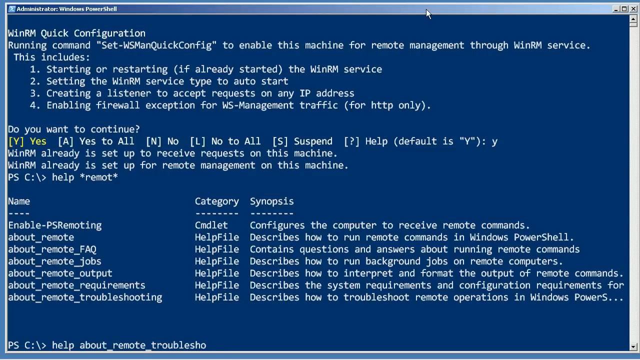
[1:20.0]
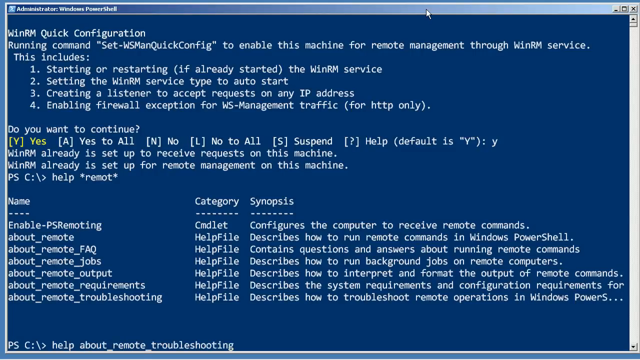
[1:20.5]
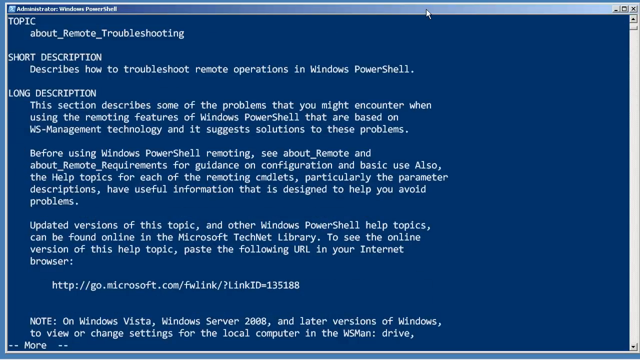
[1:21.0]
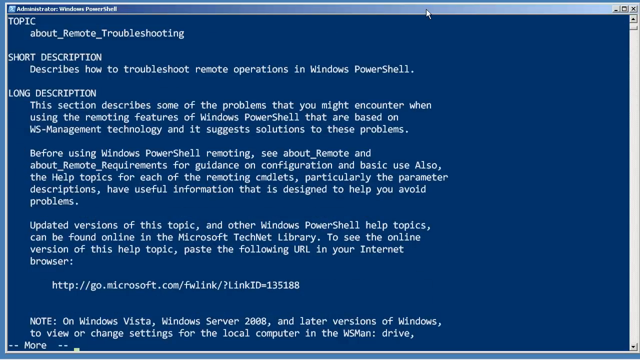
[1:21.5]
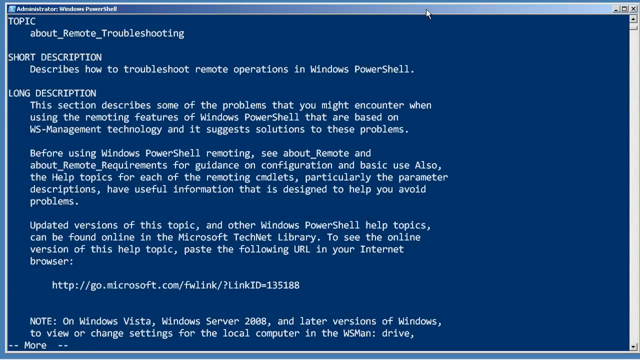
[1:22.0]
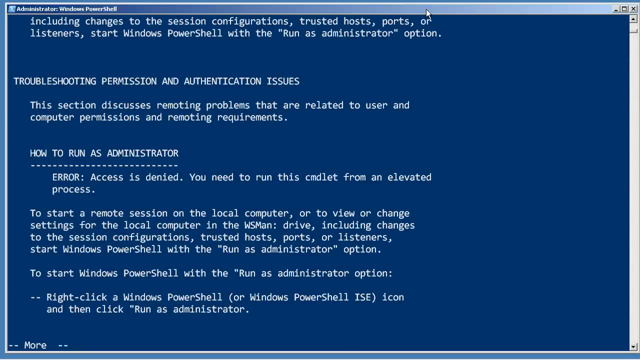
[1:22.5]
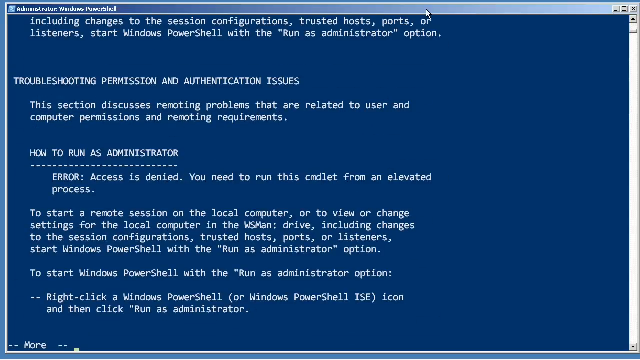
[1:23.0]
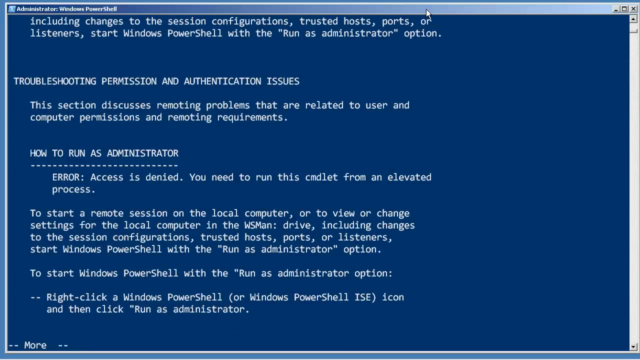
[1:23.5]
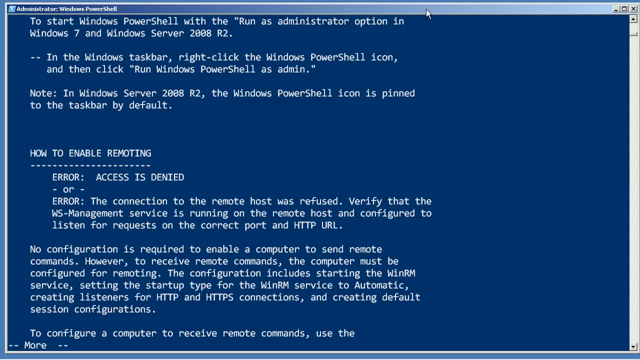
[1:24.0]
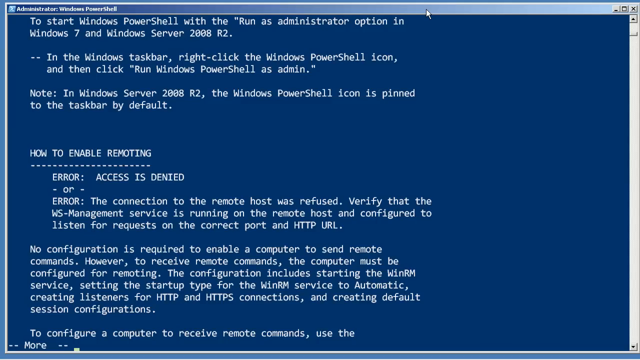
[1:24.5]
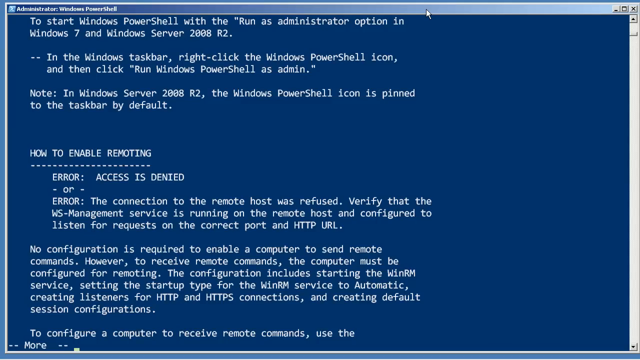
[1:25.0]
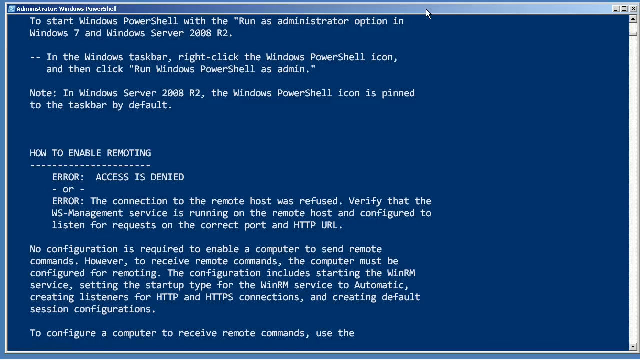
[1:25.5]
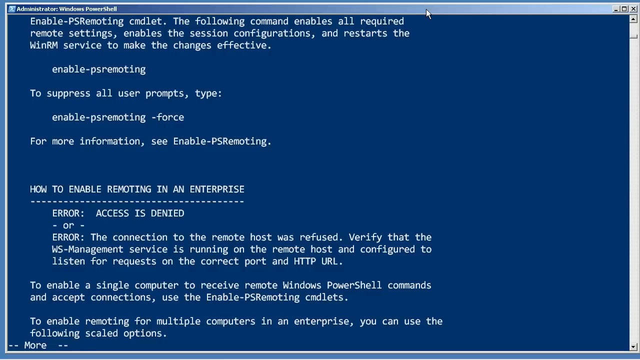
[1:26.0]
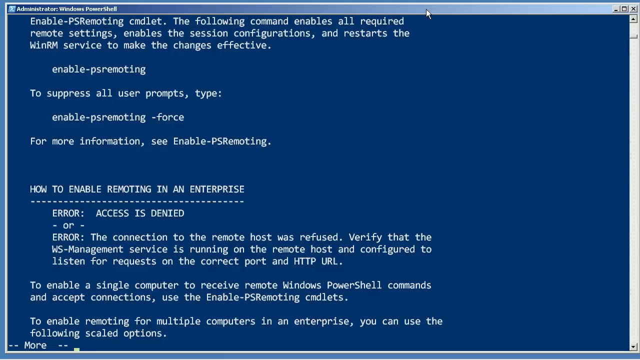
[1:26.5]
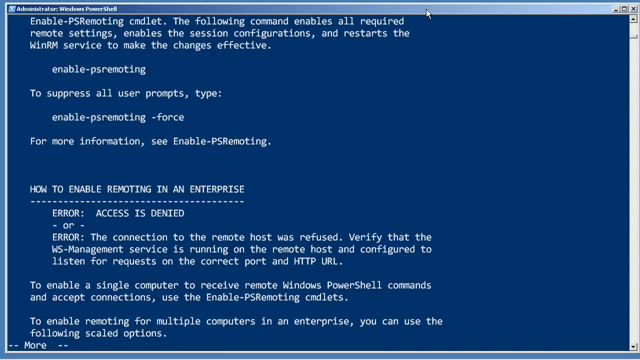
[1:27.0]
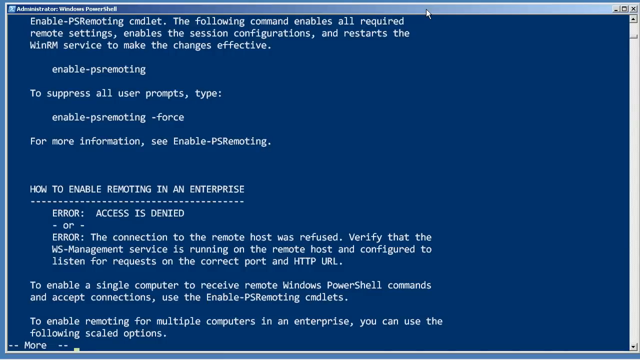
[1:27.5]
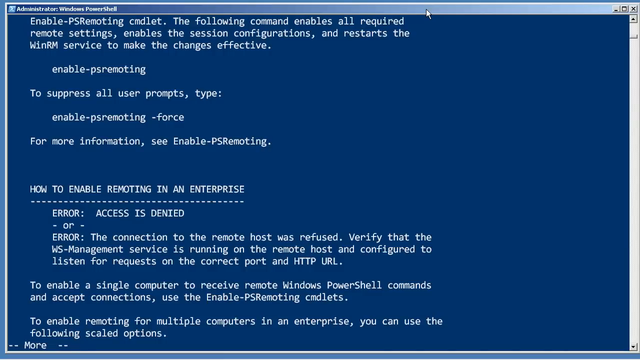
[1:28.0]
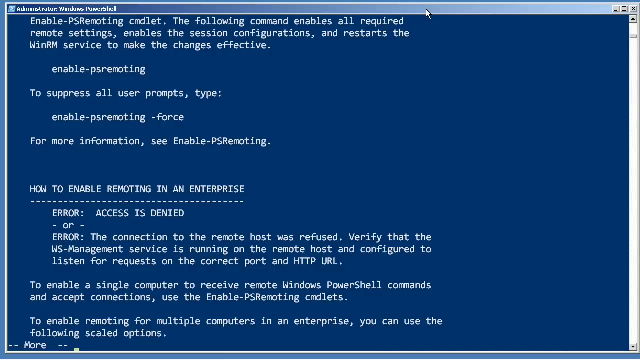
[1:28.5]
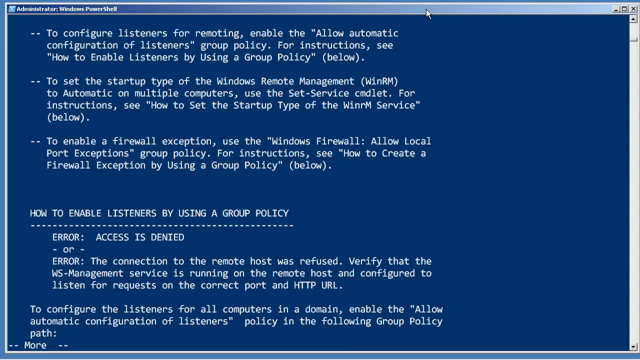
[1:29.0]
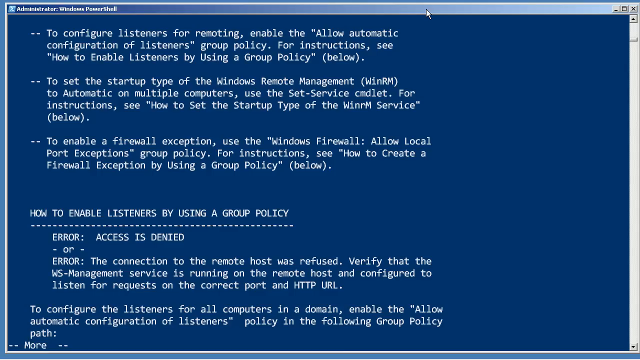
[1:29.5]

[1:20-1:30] The synopsis column reads: "configures the computer to receive remote commands," "describes how to run remote commands in Windows PowerShell," "contains the questions and answers about running remote commands," "describes how to run background," "describes how to interpret and format the output of remote commands," a line about the system requirements and configuration requirements that is cut off, and "describes how to troubleshoot remote operations in Windows Power" with the rest of PowerShell cut off. The view then moves to another section with the headings "topic," "short description" and "long description." The topic is "about_remote_troubleshooting," the short description is "describes how to troubleshoot remote operations in Windows PowerShell," and the long description begins "This section describes some of the problems that you might encounter when using." The person keeps scrolling down, and a heading about how to enable remoting in an enterprise is visible.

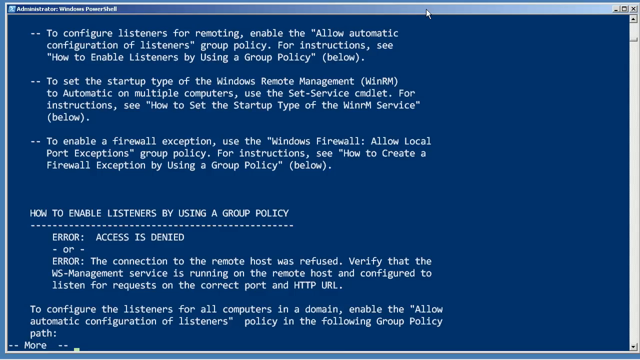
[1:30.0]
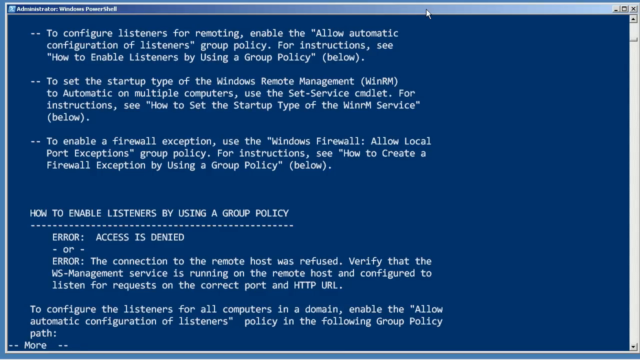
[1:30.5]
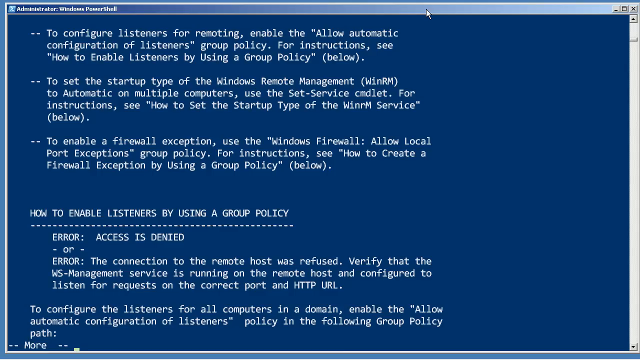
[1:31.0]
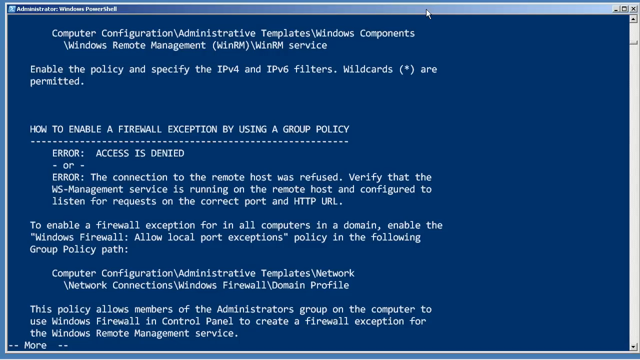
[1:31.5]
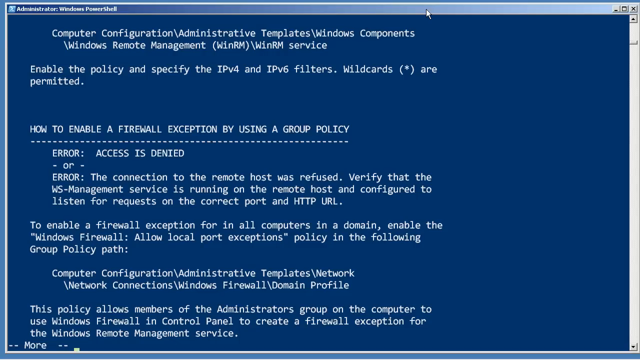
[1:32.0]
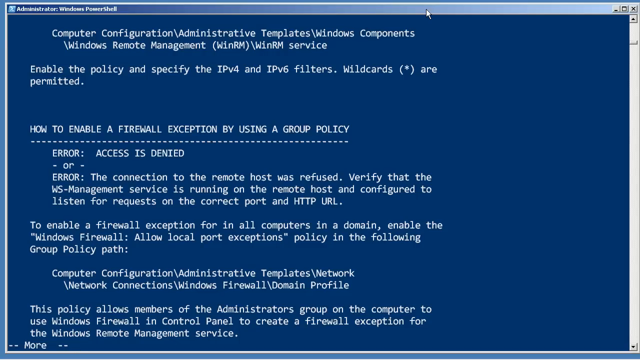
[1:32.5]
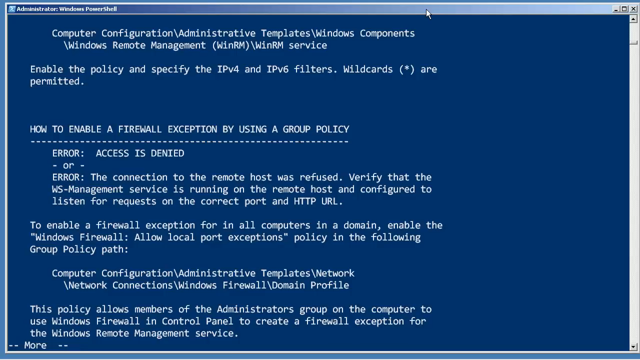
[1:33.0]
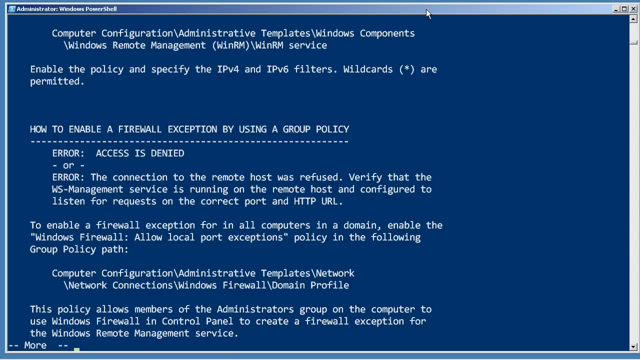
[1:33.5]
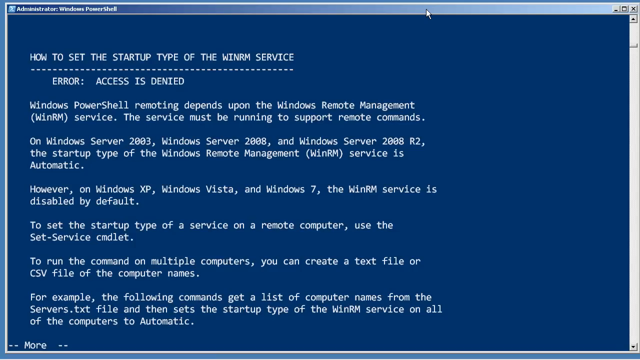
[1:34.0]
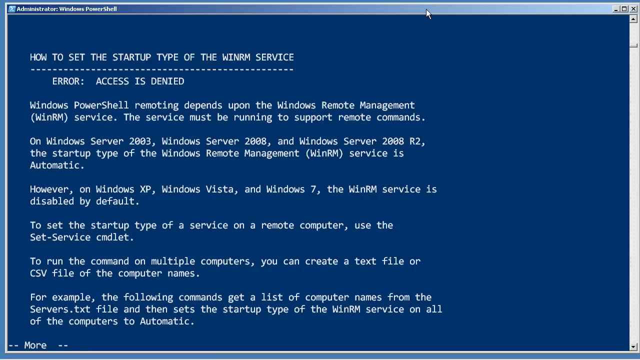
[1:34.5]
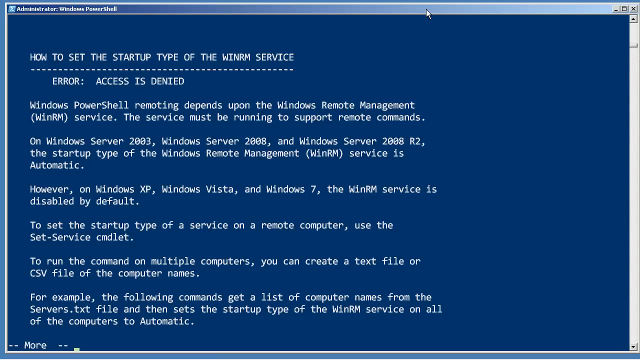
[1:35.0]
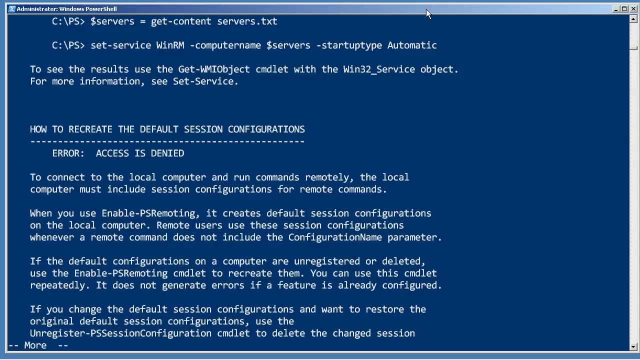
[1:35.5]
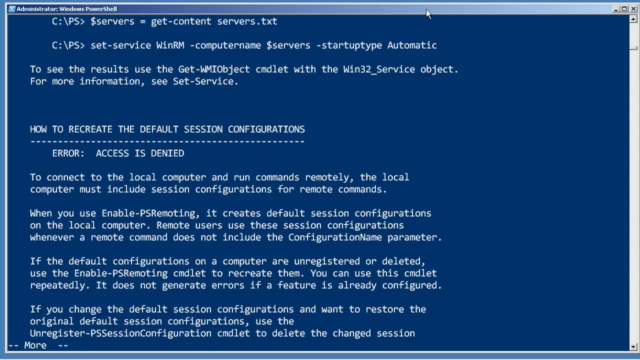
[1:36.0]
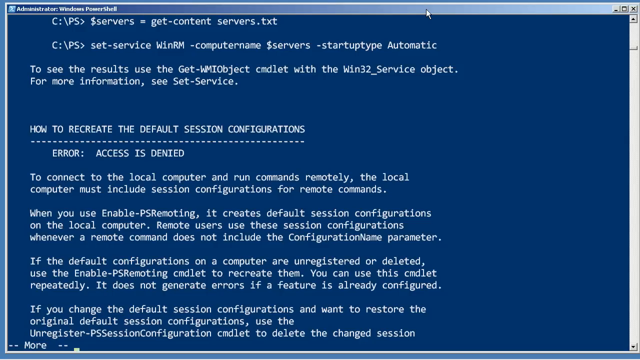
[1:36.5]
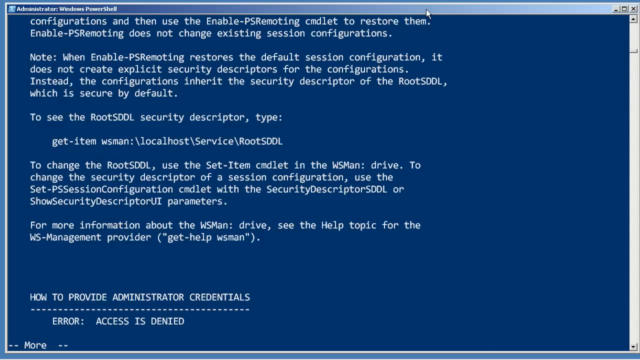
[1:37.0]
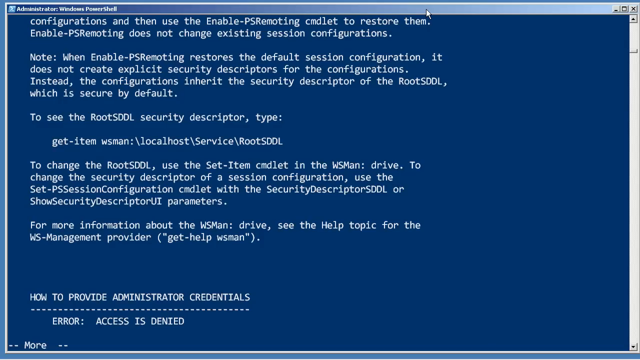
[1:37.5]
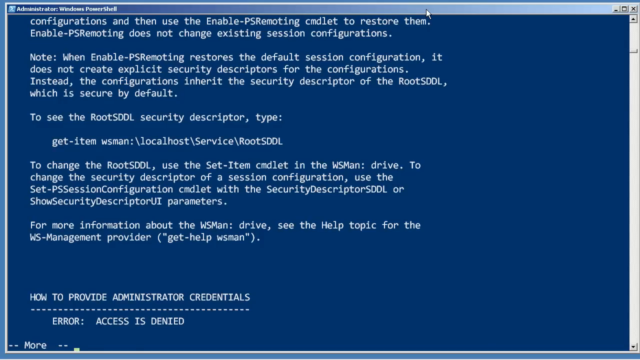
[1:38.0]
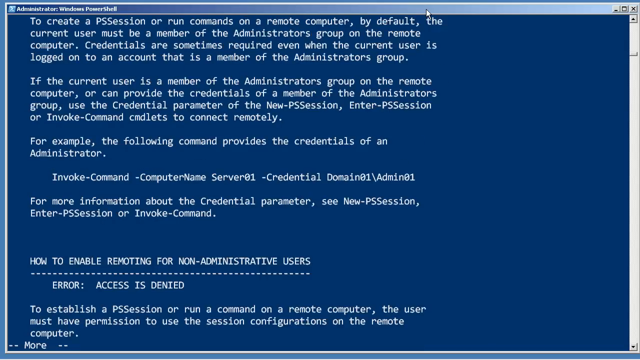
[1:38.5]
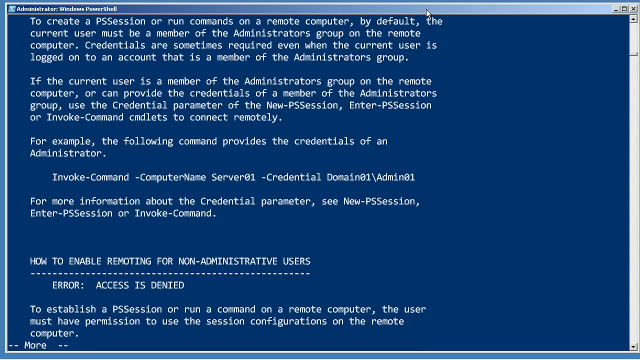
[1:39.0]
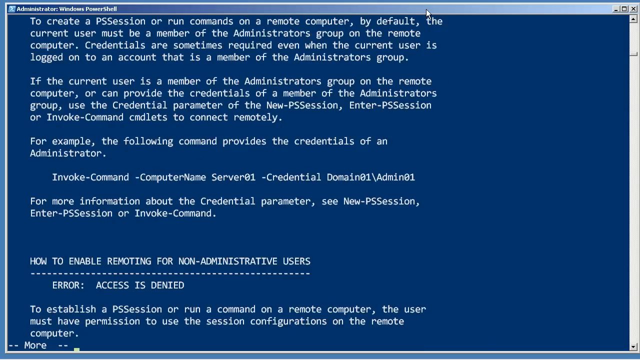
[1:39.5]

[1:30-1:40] Further down the document, text includes "to enable a firewall exception, use the Windows Firewall: Allow local port exceptions group policy," "For instructions, see how to create a firewall exception by using a group policy below," "how to enable listeners by using a group policy," "access is denied," "the connection to remote host was refused," and "verify that WS management is running on remote host and configured to listen for requests on correct port."